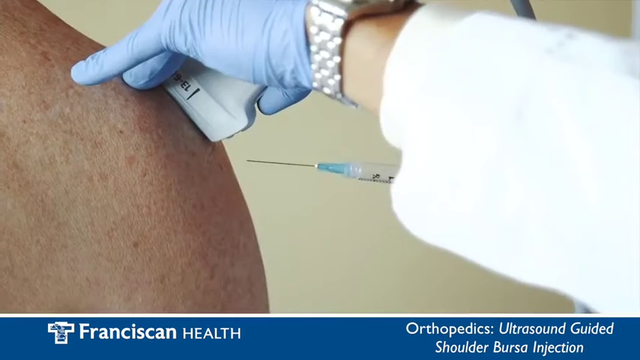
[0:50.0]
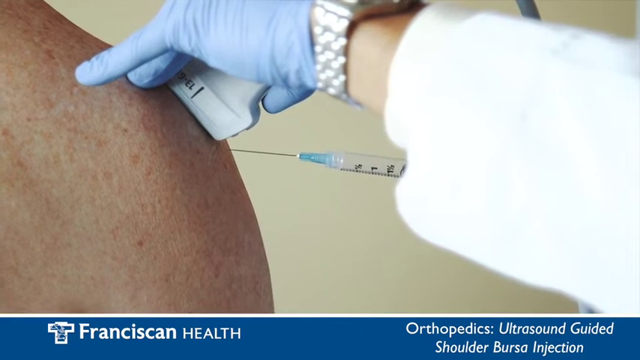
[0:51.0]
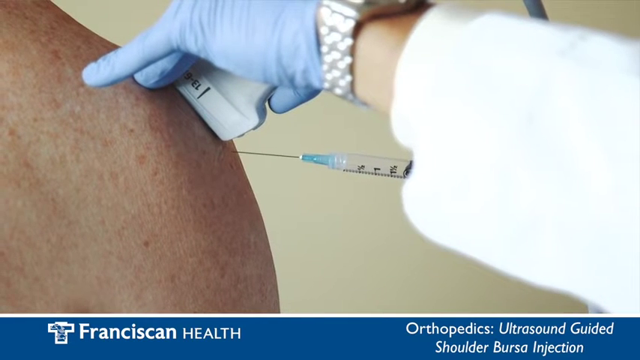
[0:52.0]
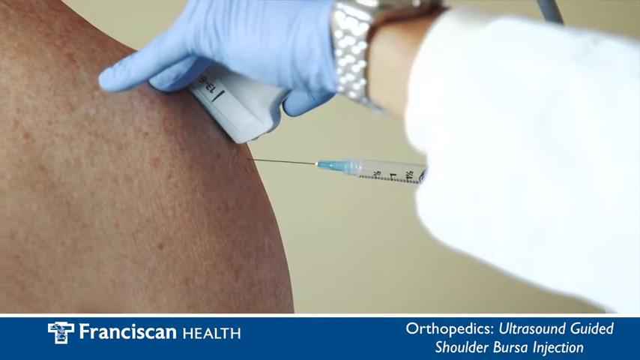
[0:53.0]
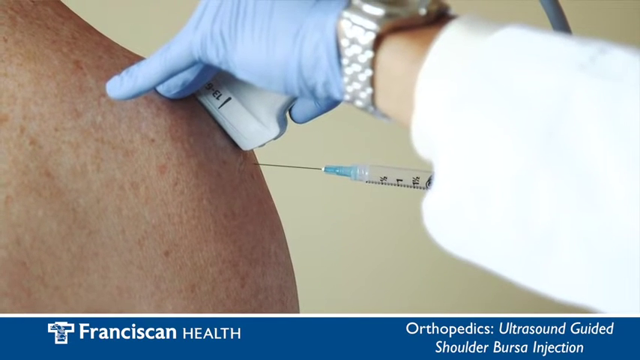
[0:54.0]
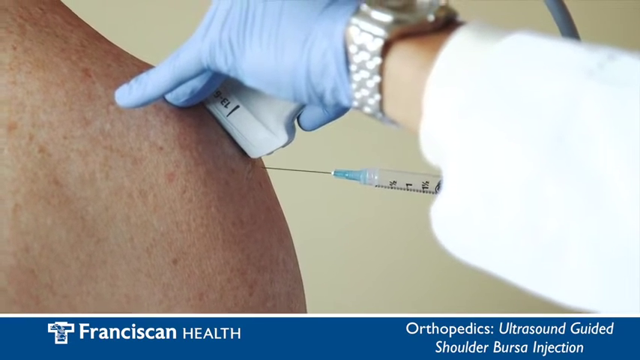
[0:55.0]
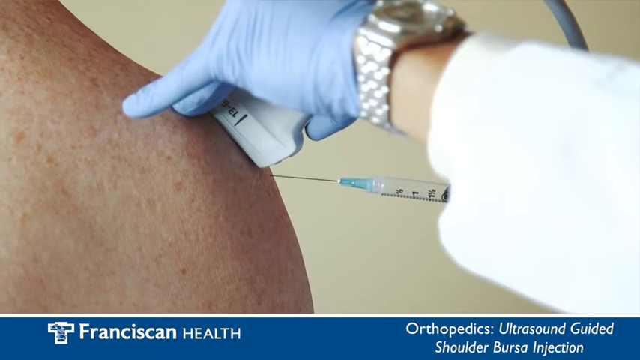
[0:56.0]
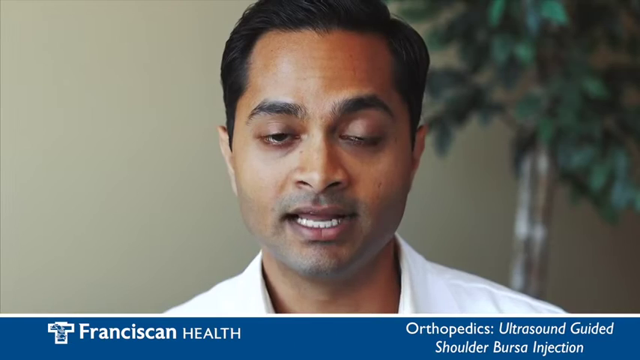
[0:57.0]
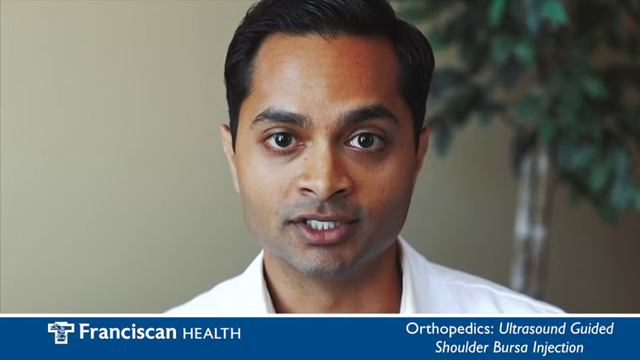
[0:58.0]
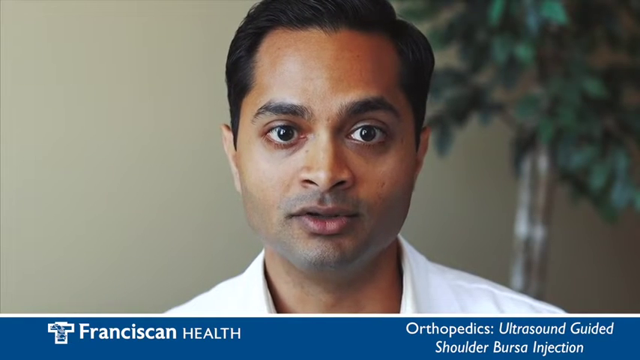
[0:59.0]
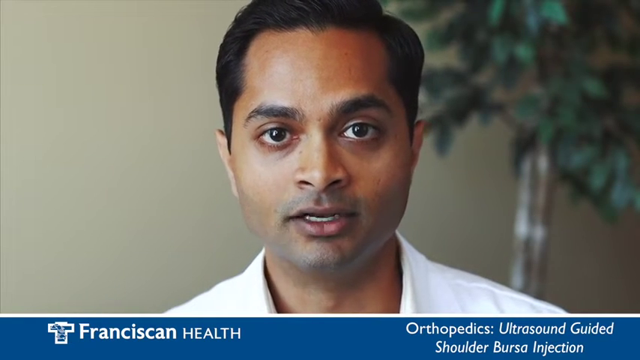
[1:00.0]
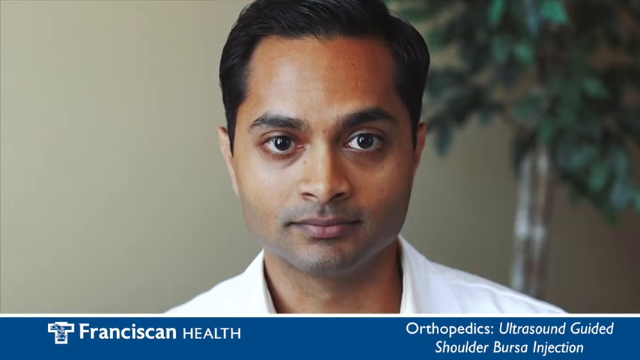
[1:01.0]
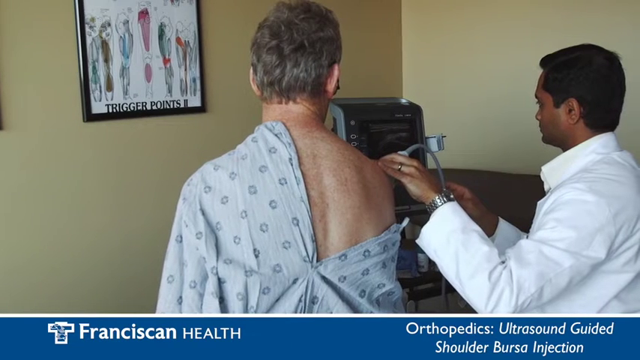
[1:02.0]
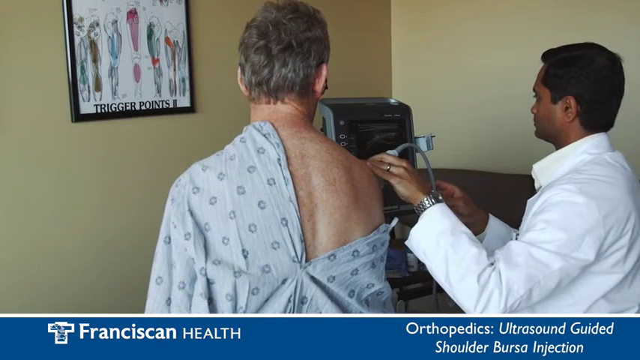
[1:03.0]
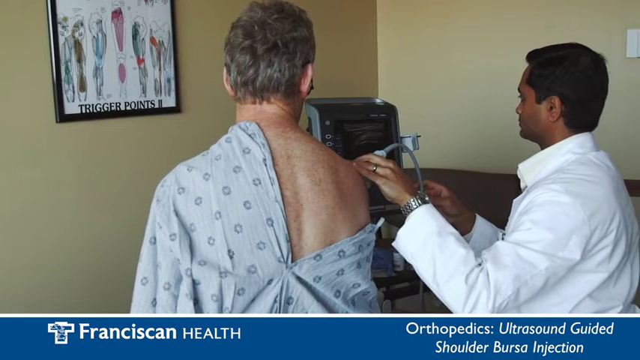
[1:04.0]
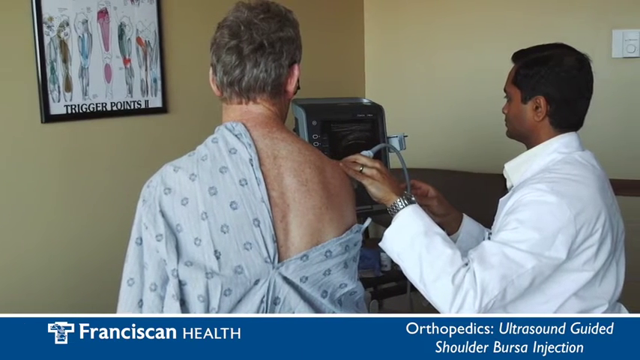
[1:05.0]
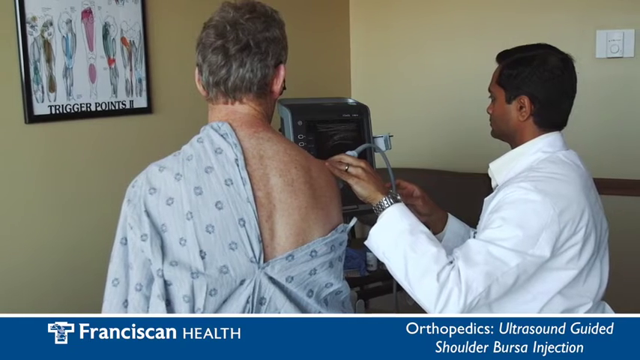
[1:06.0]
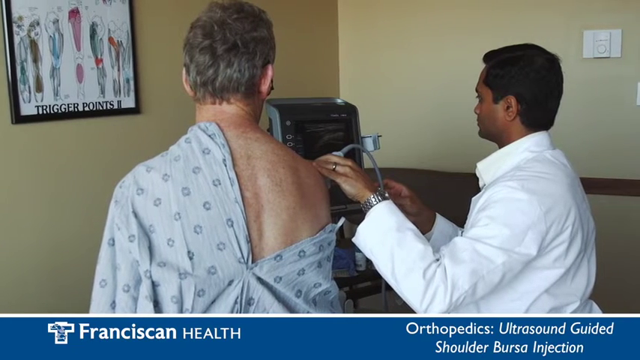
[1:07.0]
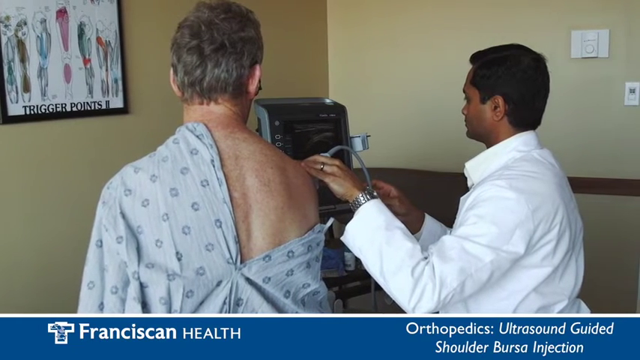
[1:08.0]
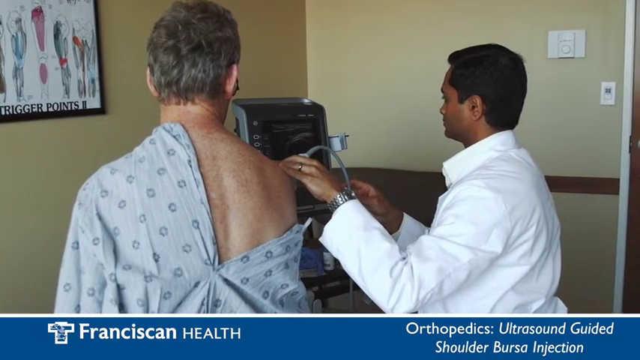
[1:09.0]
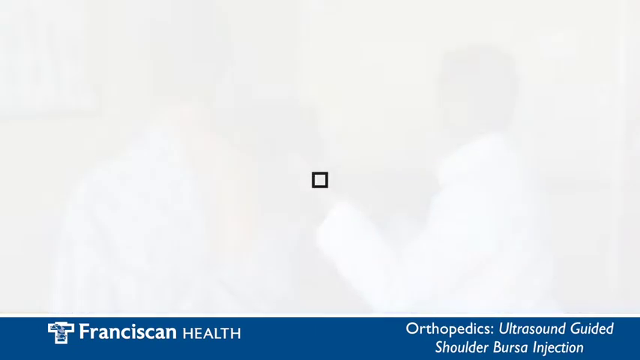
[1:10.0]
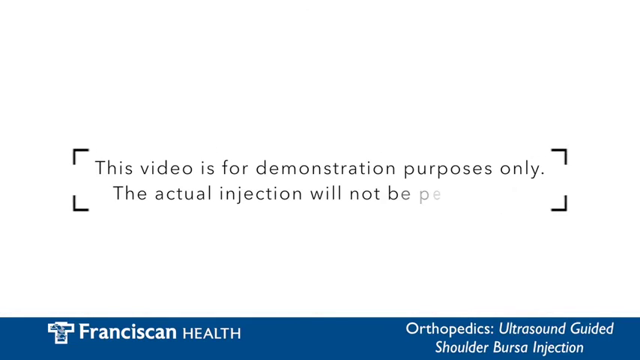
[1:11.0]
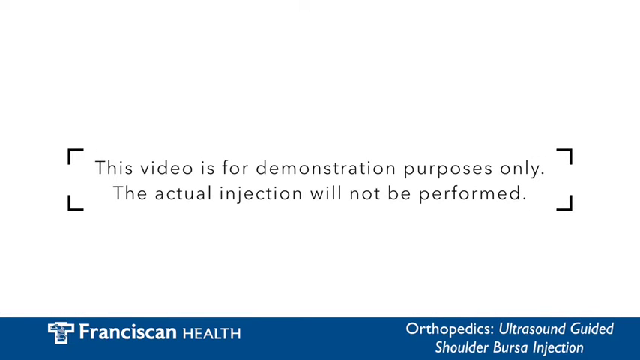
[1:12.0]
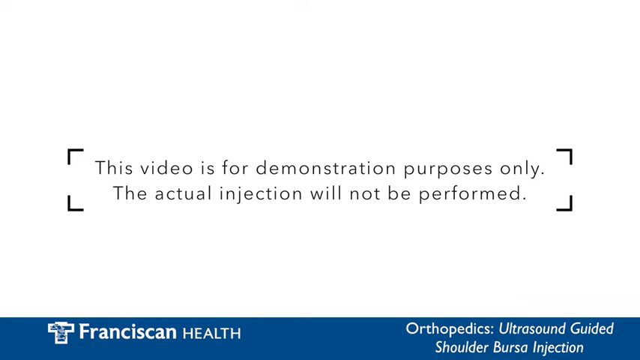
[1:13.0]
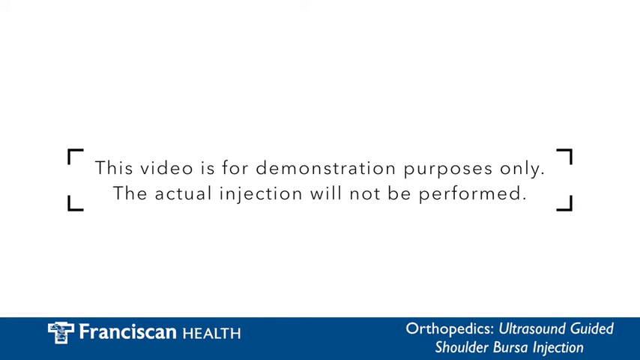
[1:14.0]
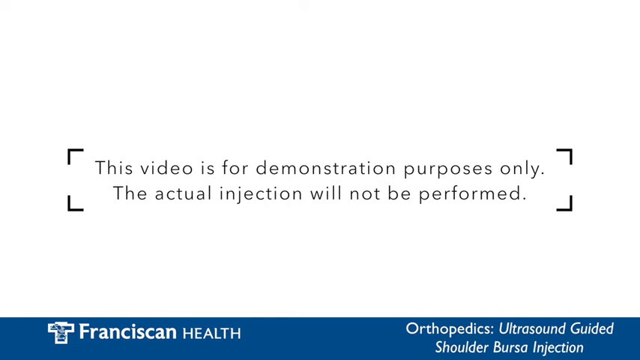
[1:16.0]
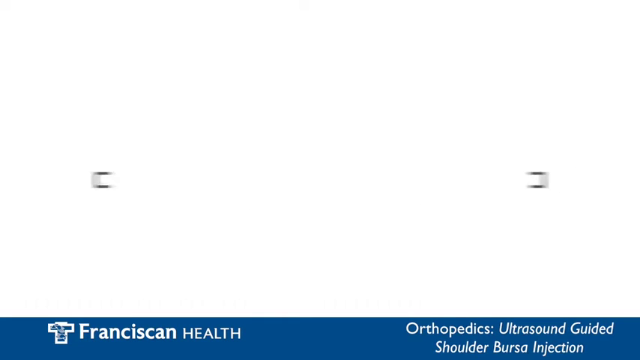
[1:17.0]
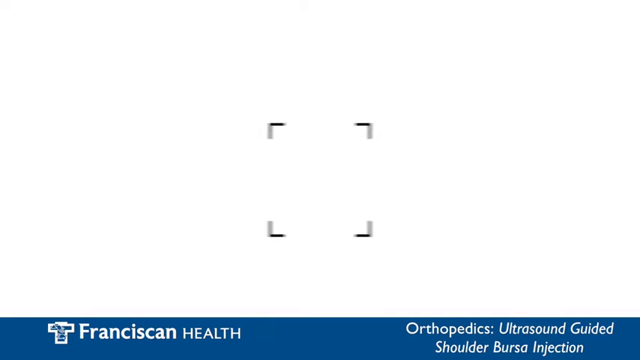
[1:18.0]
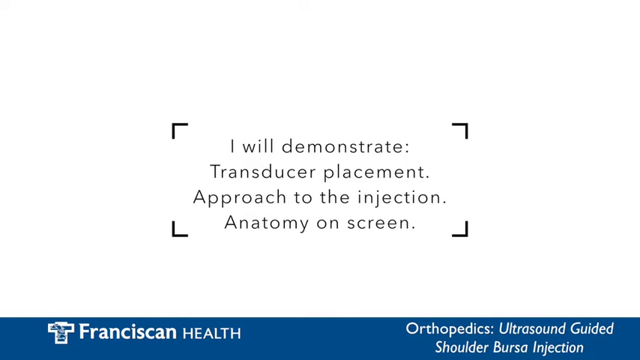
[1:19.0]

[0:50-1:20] The doctor holds the scanner to the man's shoulder, which has some slight freckles or sunspots. The doctor wears a silver watch and blue nitrile gloves and injects the needle into the shoulder just below the scanner. The camera pans to the doctor saying a few words, then returns to the image of the doctor holding the scanner to the patient's shoulder as the camera pans slightly across the room from left to right. A white screen appears with black text reading "this video is for demonstration purposes only the actual injection will not be performed." The text then changes to "I will demonstrate transducer placement approach to the injection anatomy on screen."